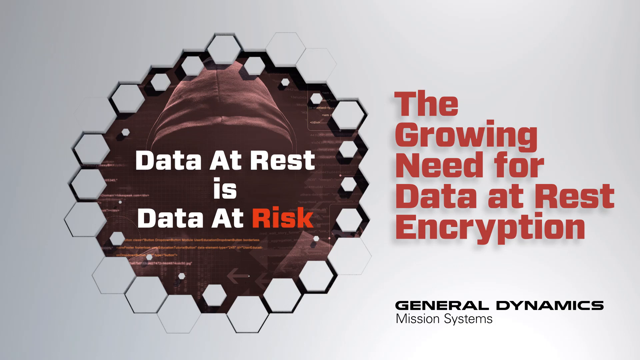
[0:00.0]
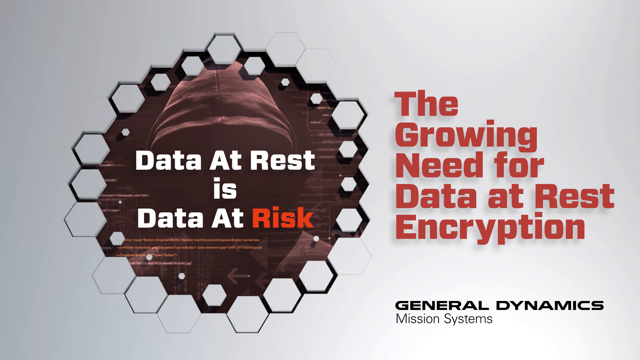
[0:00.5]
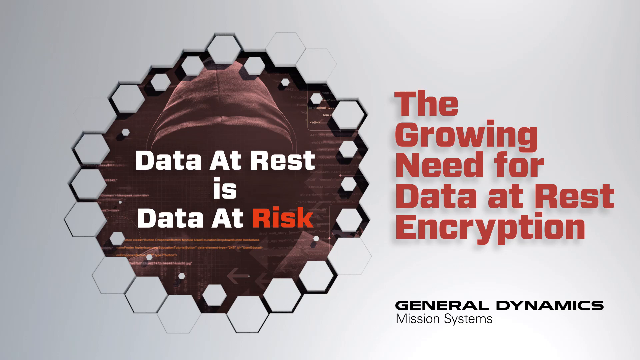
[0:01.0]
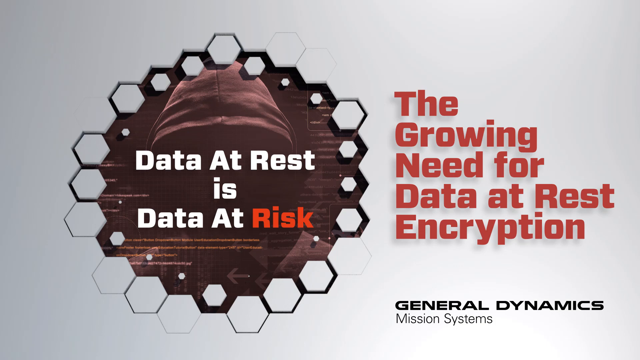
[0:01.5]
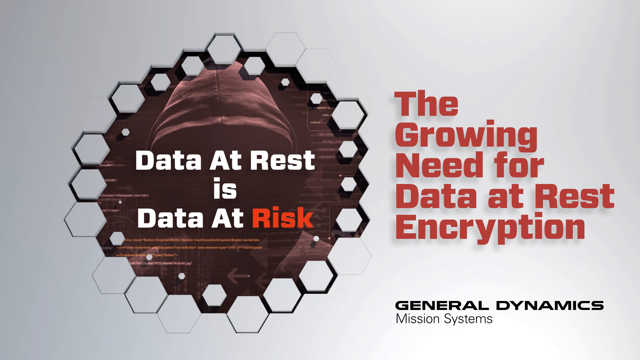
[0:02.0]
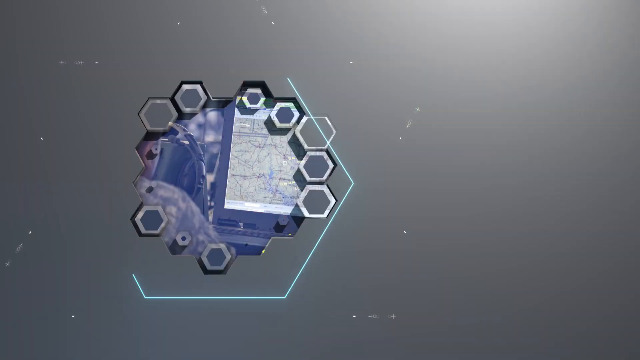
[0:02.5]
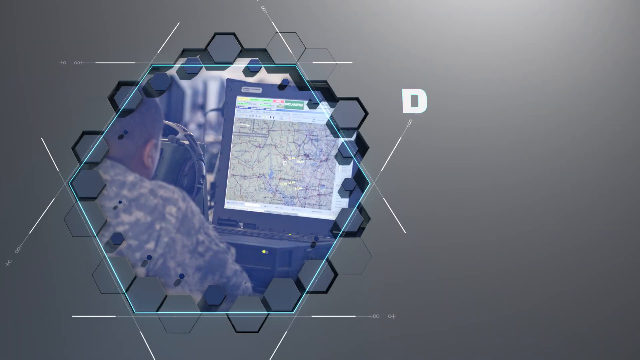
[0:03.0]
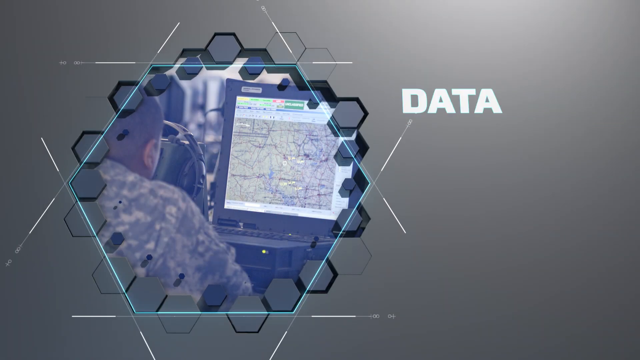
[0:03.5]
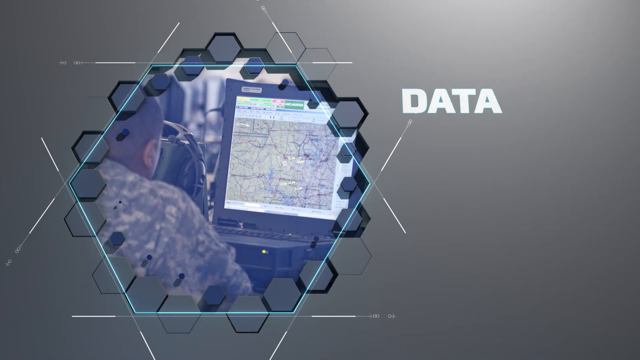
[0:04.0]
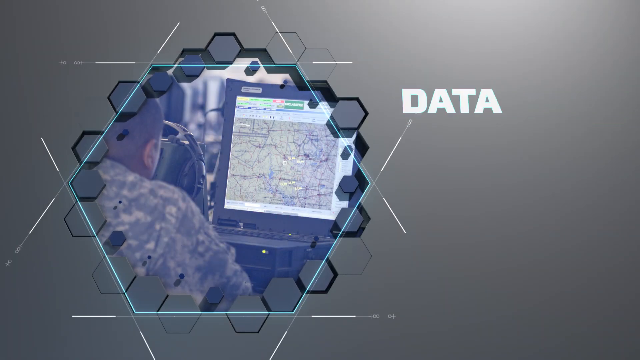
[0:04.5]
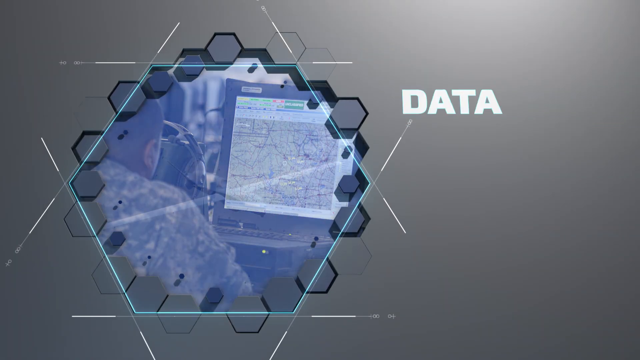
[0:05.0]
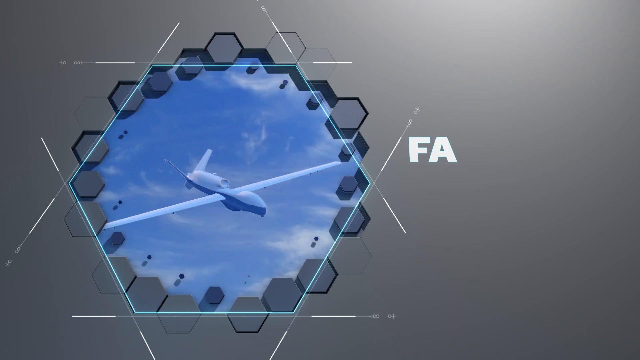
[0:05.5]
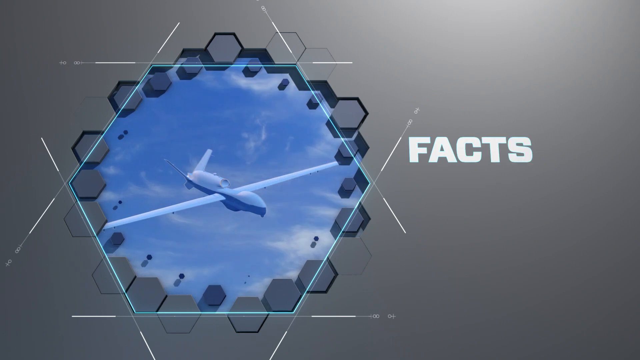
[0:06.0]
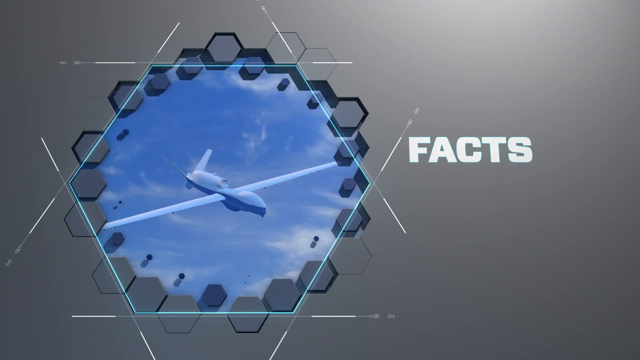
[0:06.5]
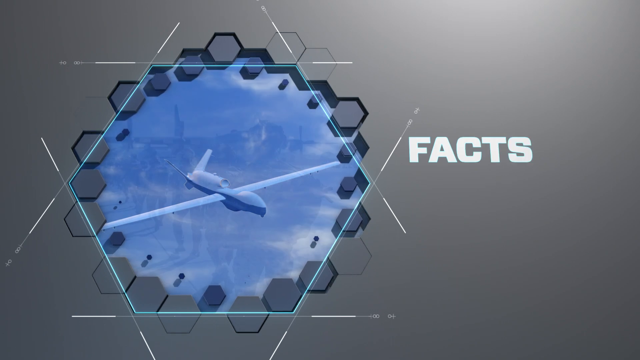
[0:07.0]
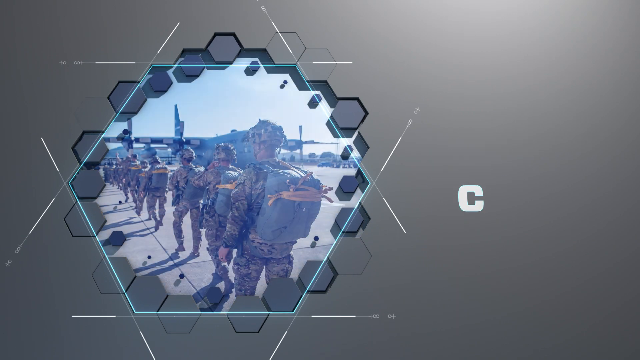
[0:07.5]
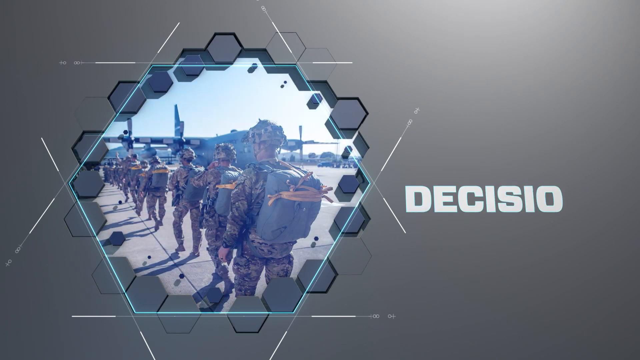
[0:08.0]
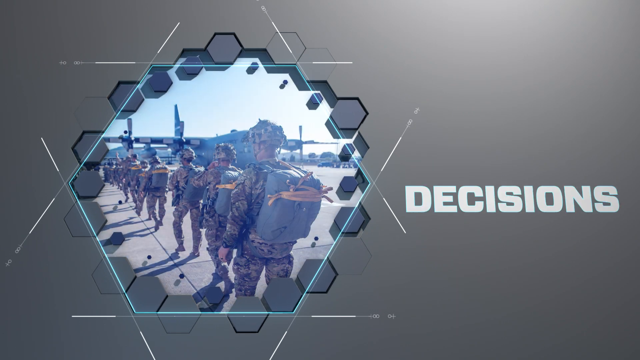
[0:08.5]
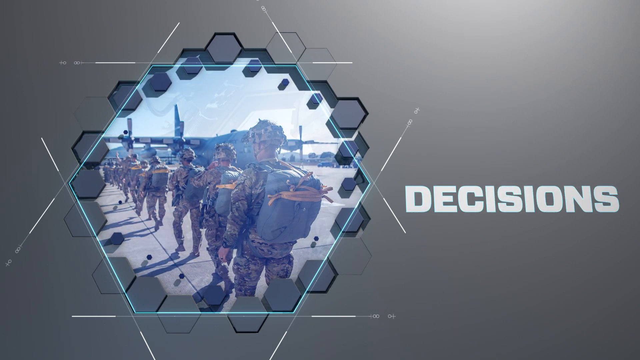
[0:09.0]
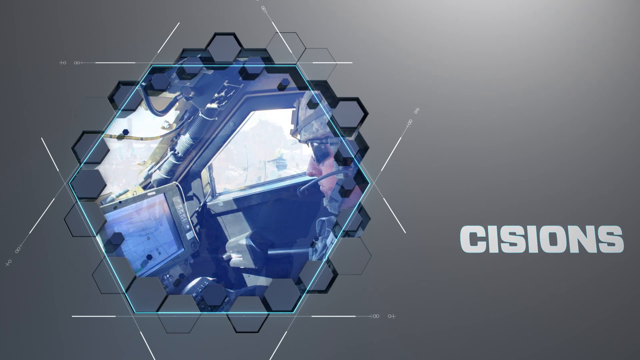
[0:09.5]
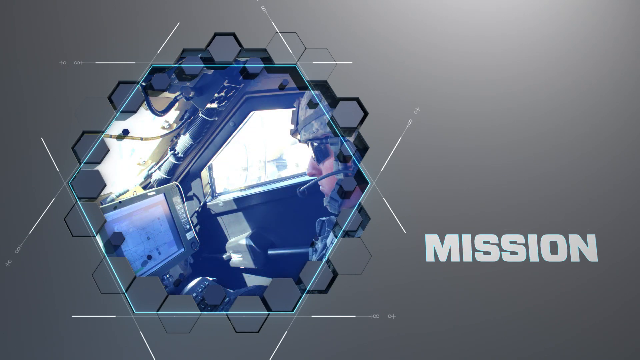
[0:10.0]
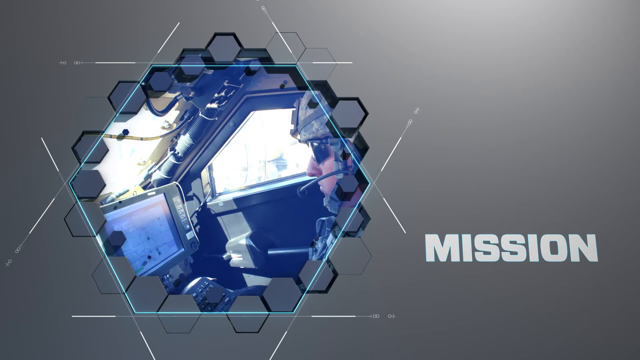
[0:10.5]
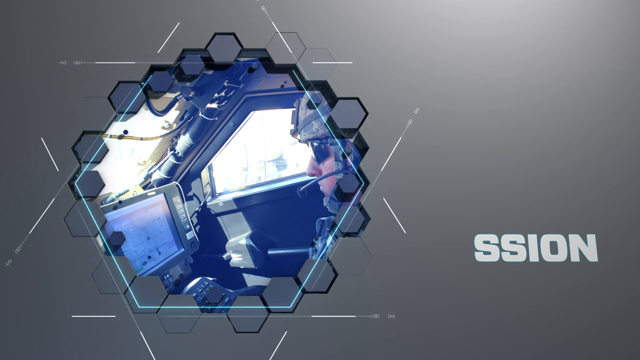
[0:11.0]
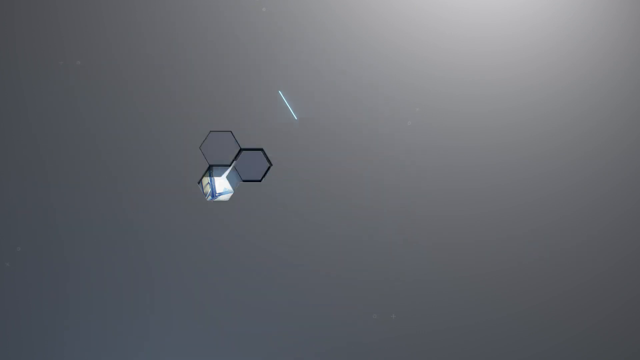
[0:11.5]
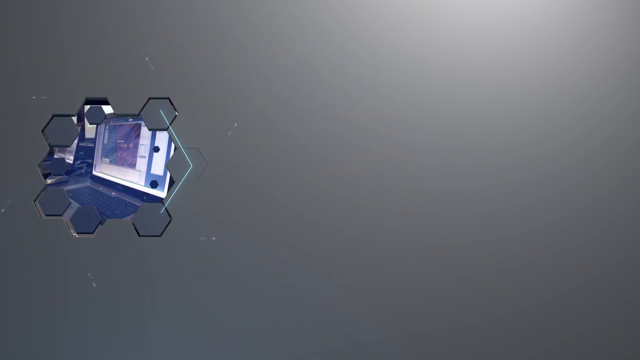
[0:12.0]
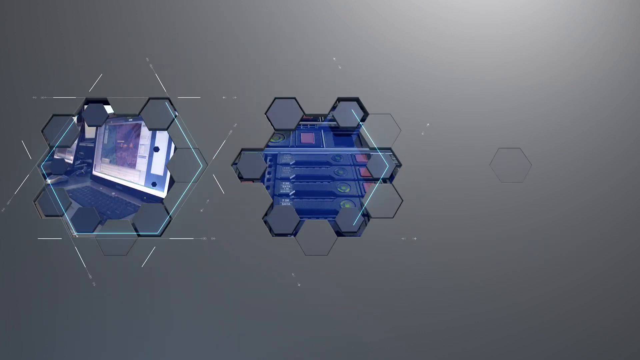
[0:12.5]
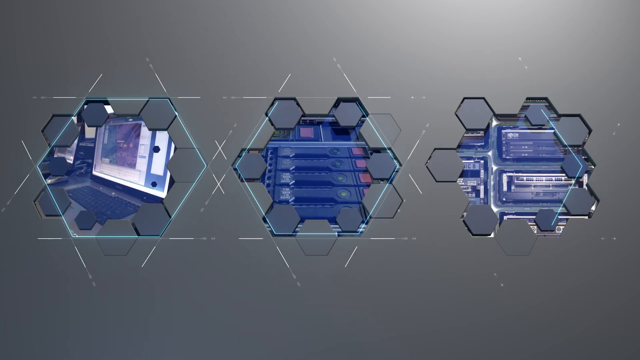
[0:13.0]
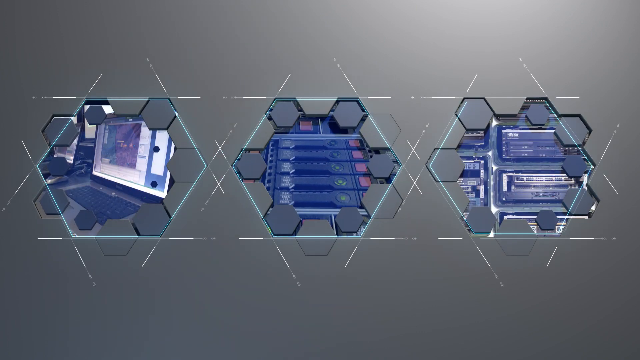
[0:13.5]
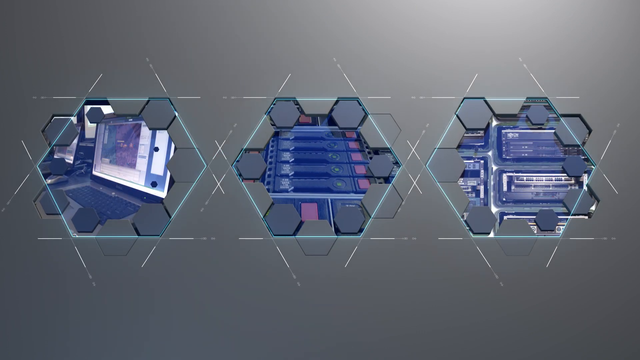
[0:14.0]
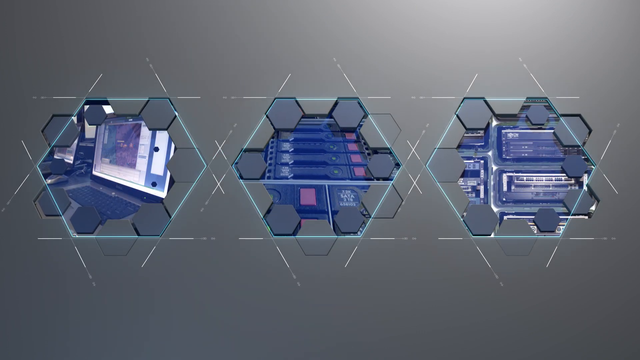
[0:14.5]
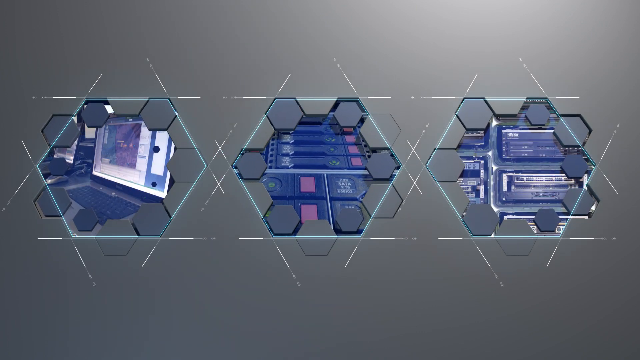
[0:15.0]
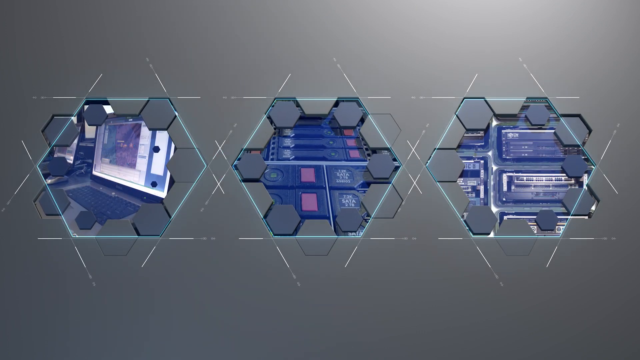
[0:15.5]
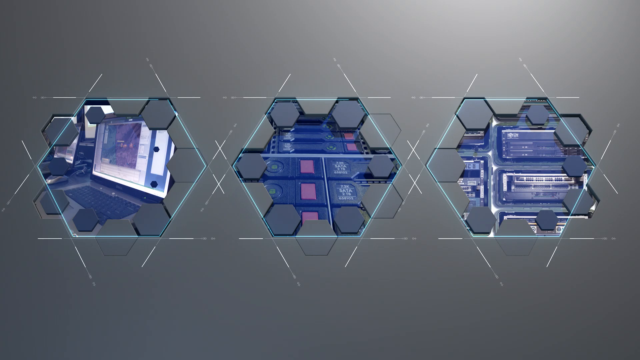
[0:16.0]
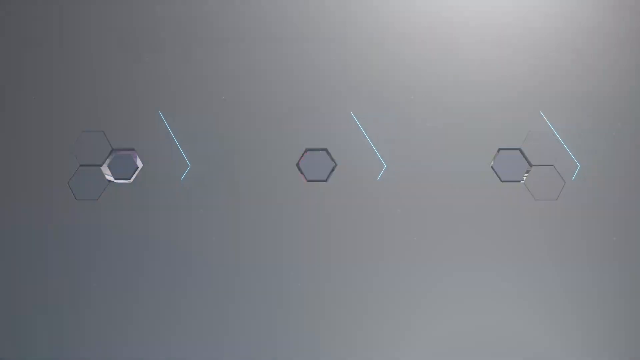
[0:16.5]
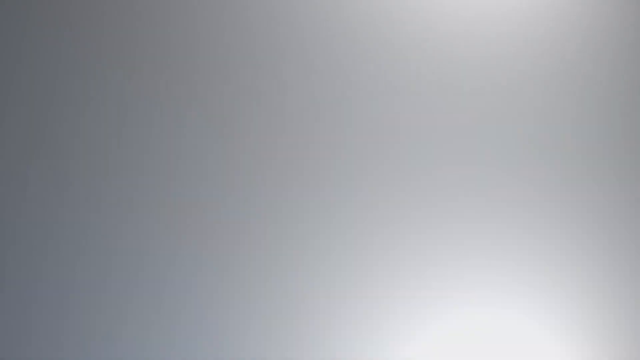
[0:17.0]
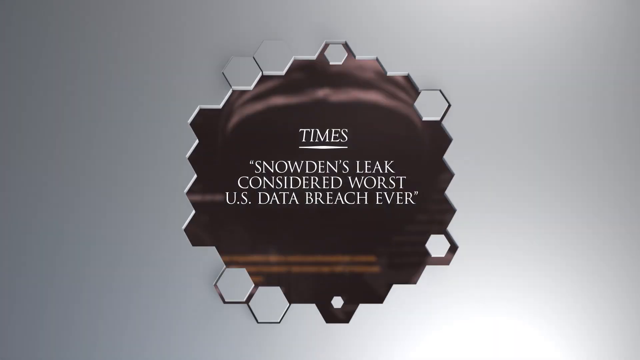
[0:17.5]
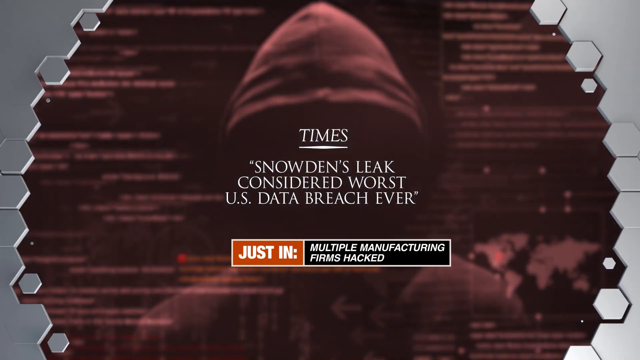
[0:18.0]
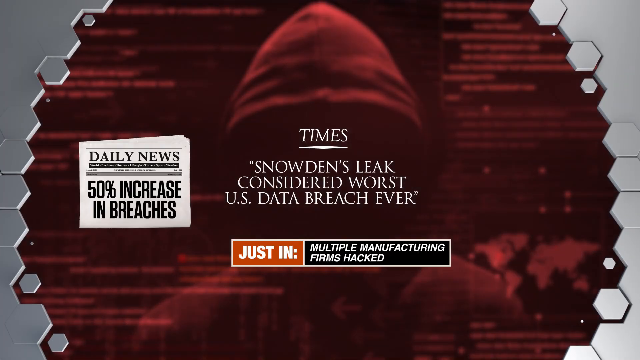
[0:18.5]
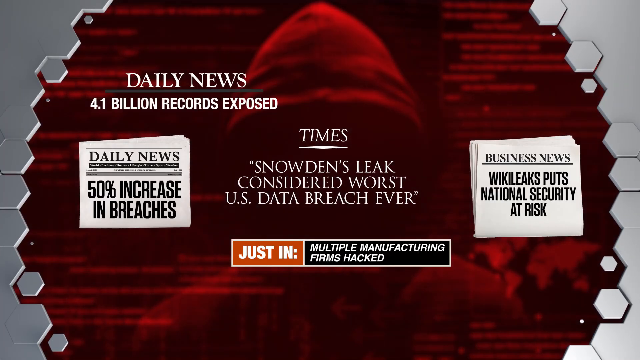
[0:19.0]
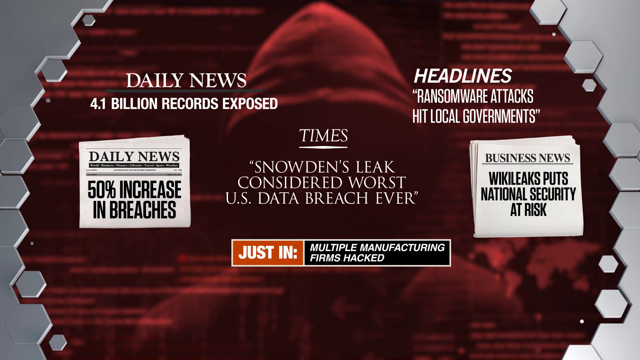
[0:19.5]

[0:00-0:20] The video opens with text on the left, and behind it is a circle containing what looks to be some sort of hooded figure. The inside of the circle is a maroon color, with hexagon shapes rounding out the outer part of the circle. The text reads "data at rest is data at risk," with "risk" in red while the rest of the text is white. To the right is more text reading "the growing need for data at rest encryption." Next, another circle appears showing different pictures, including soldiers and an airplane; this looks to be some sort of intro or possibly just part of a video. After that, a number of quotes from news outlets appear.